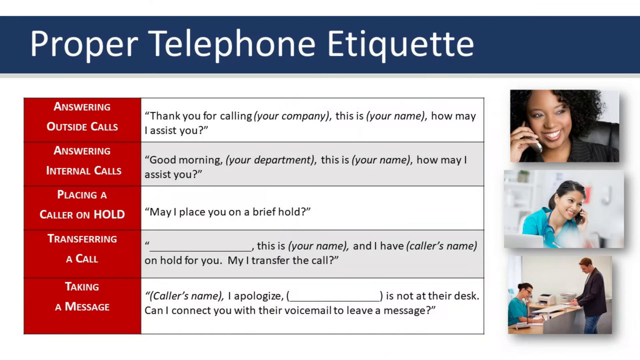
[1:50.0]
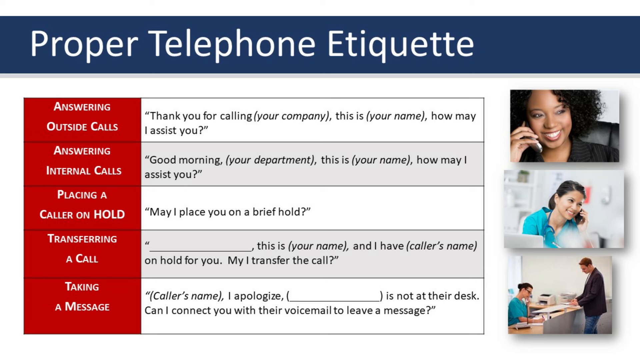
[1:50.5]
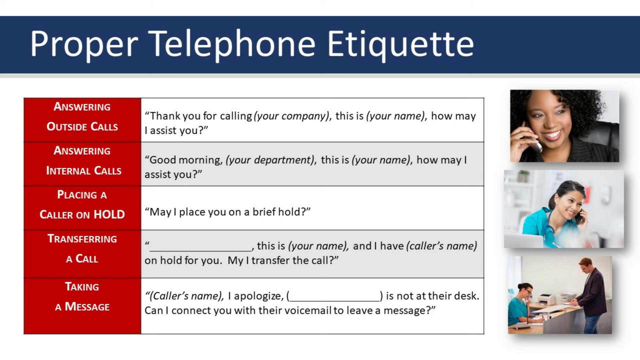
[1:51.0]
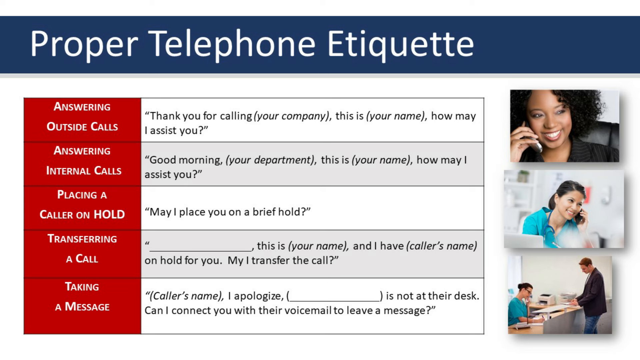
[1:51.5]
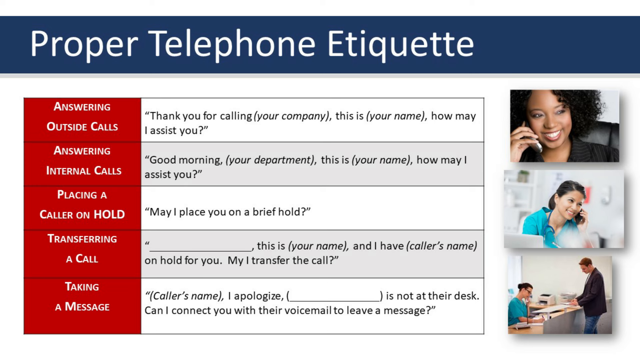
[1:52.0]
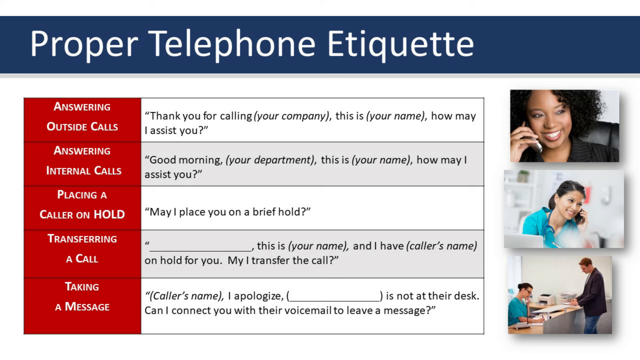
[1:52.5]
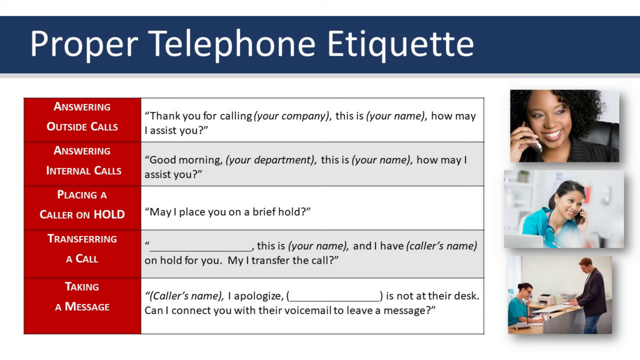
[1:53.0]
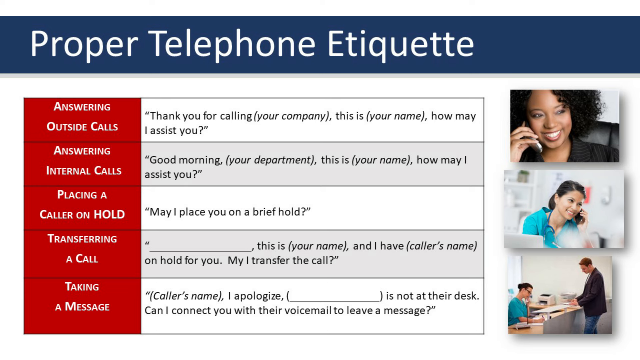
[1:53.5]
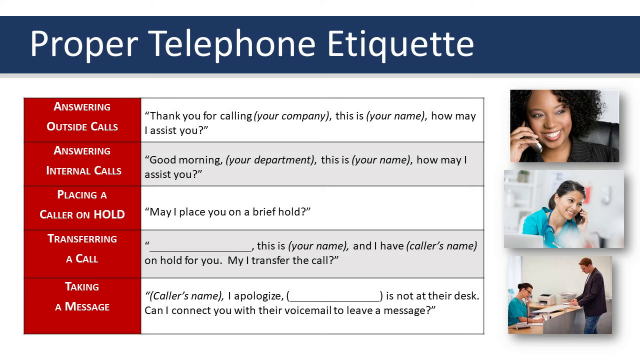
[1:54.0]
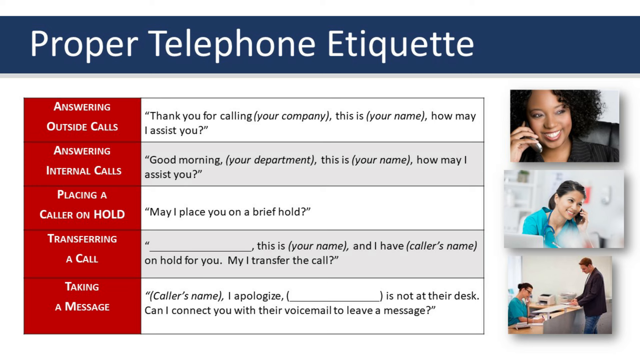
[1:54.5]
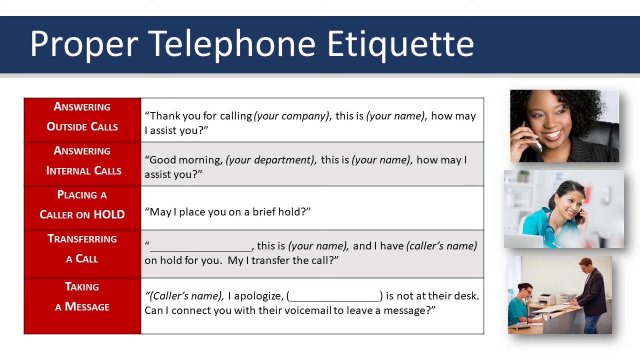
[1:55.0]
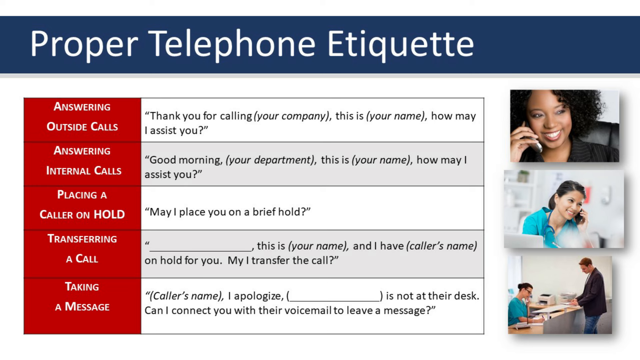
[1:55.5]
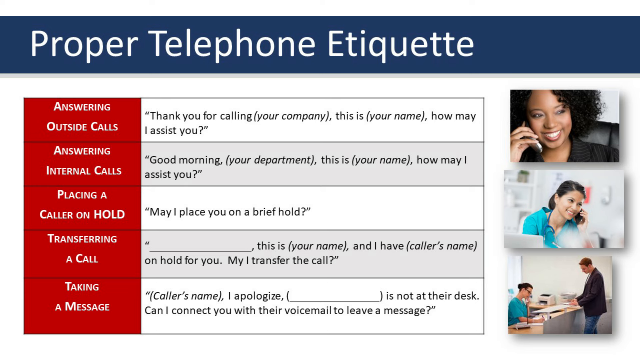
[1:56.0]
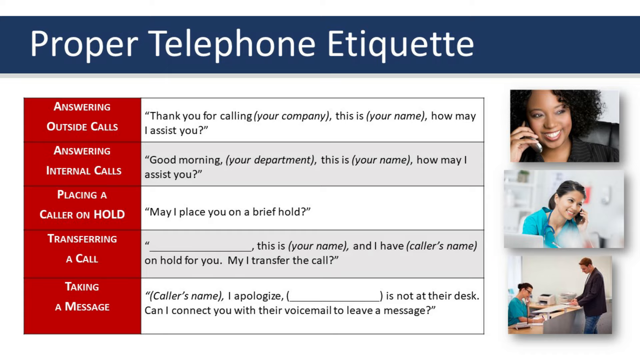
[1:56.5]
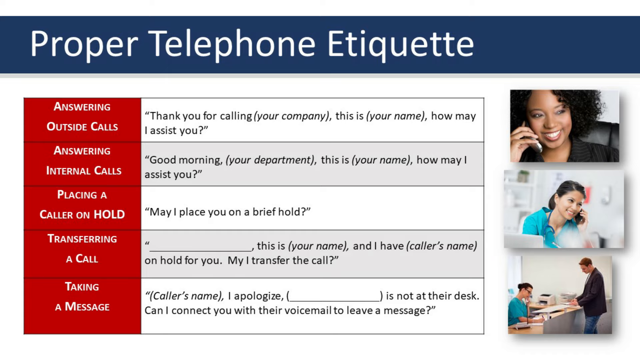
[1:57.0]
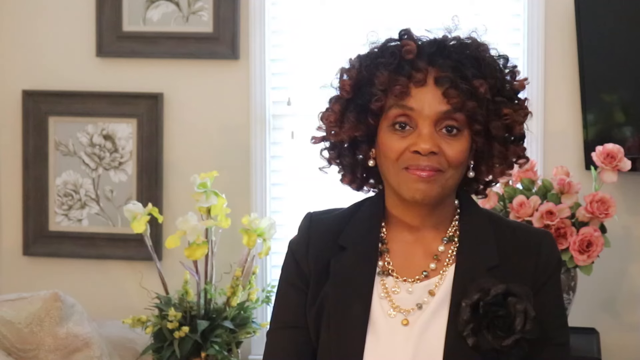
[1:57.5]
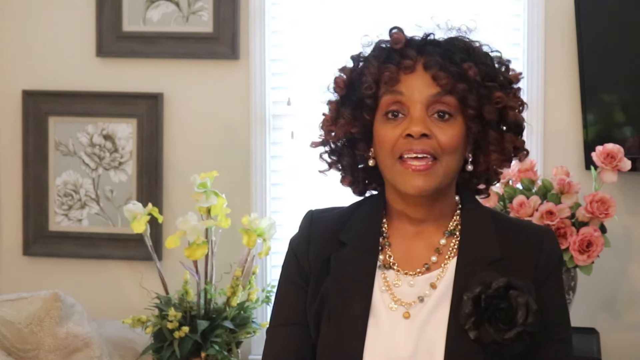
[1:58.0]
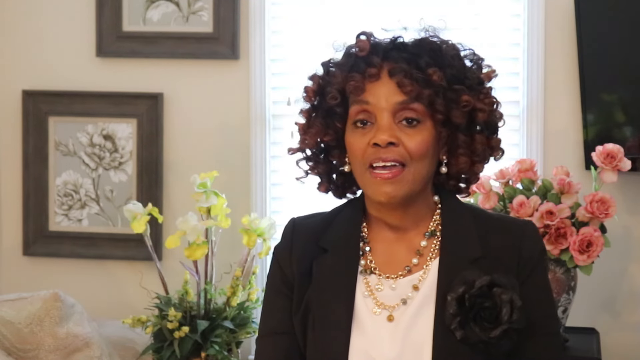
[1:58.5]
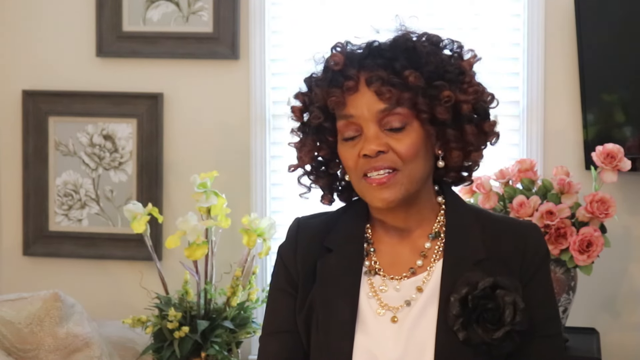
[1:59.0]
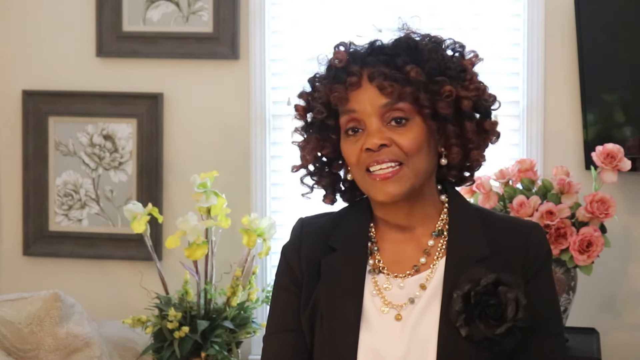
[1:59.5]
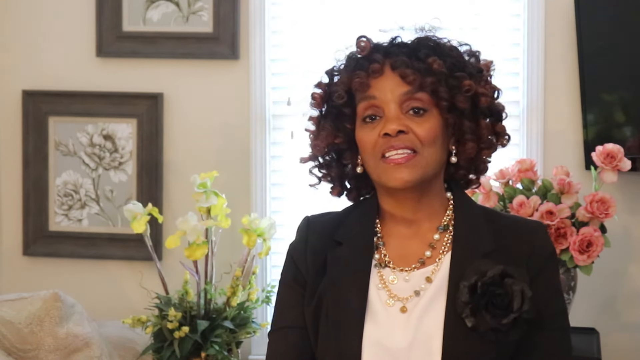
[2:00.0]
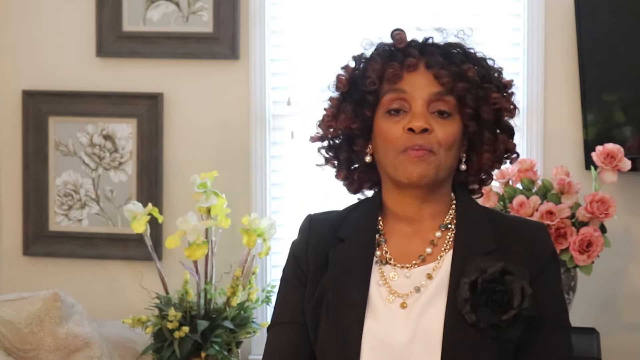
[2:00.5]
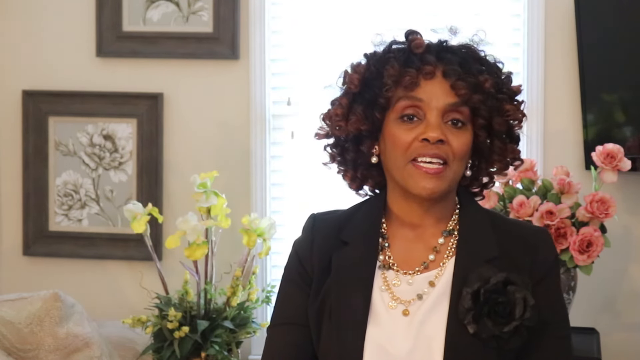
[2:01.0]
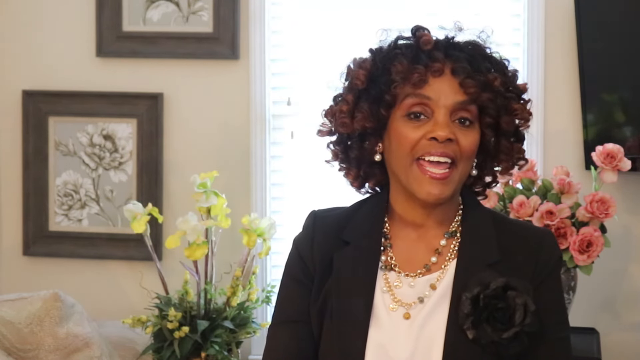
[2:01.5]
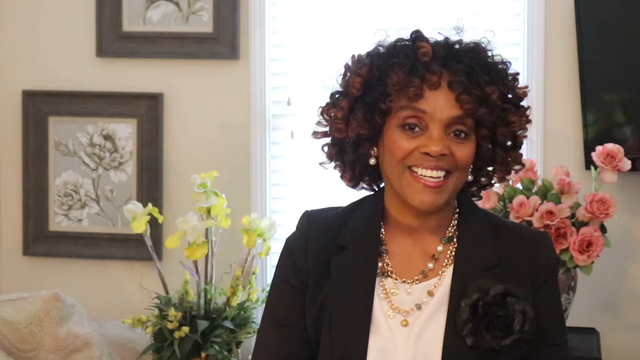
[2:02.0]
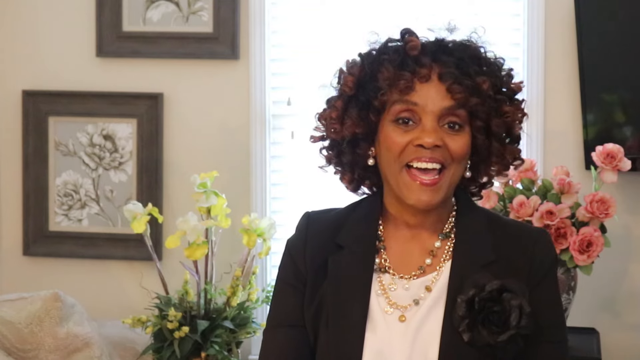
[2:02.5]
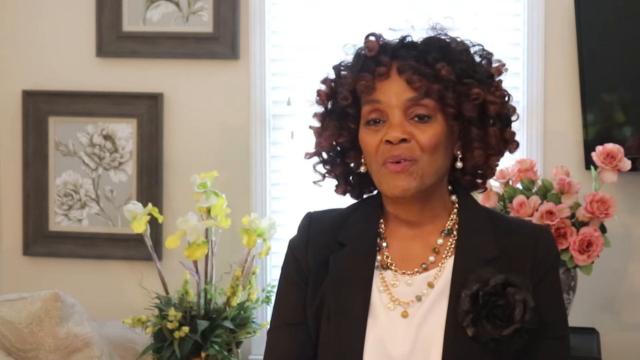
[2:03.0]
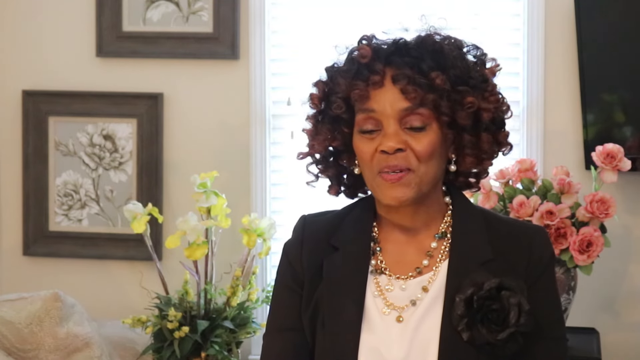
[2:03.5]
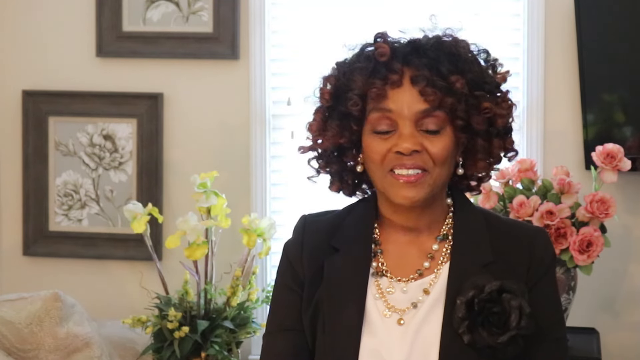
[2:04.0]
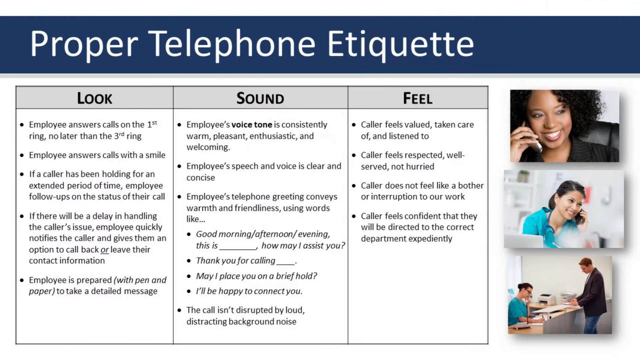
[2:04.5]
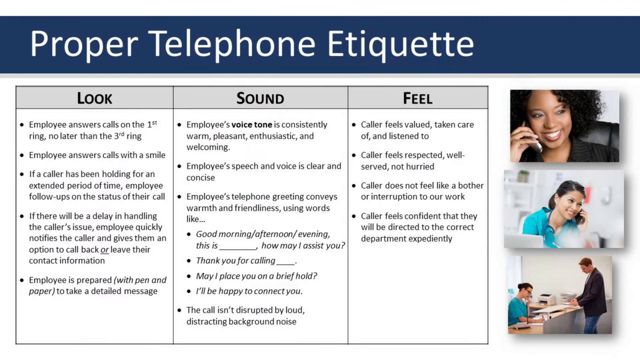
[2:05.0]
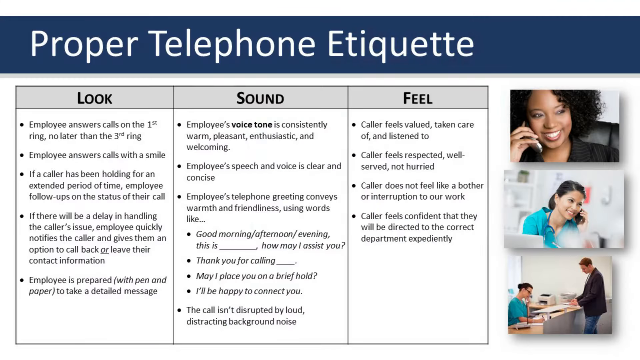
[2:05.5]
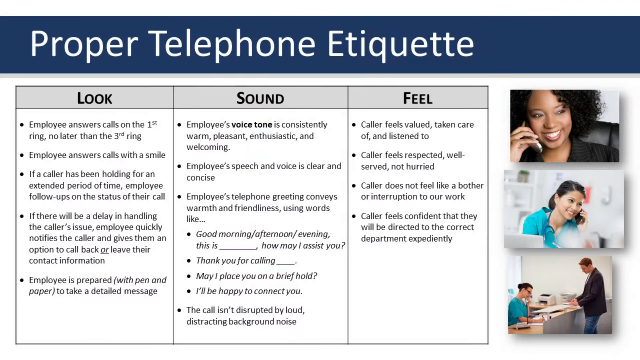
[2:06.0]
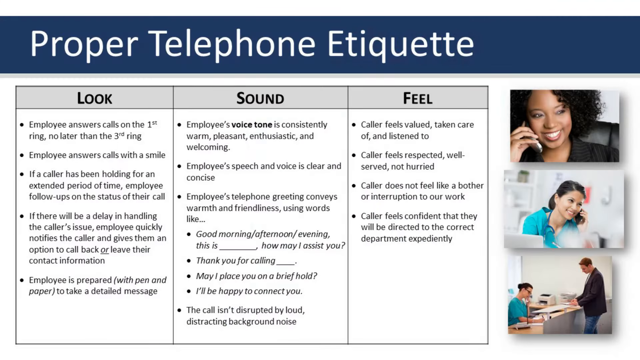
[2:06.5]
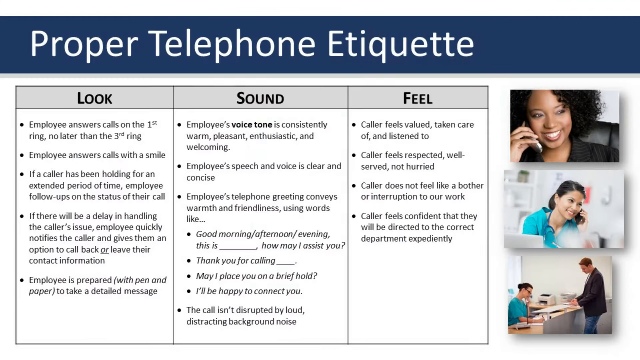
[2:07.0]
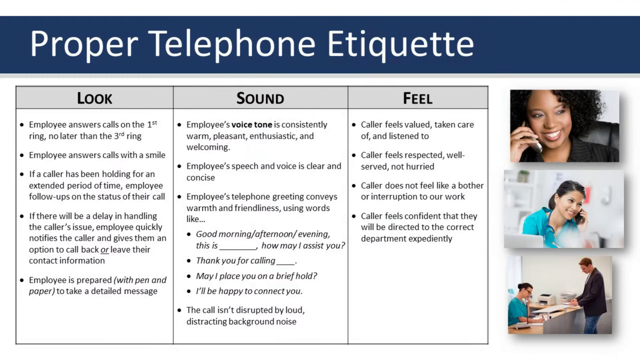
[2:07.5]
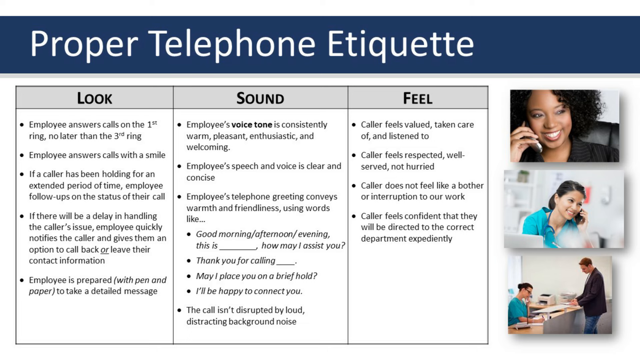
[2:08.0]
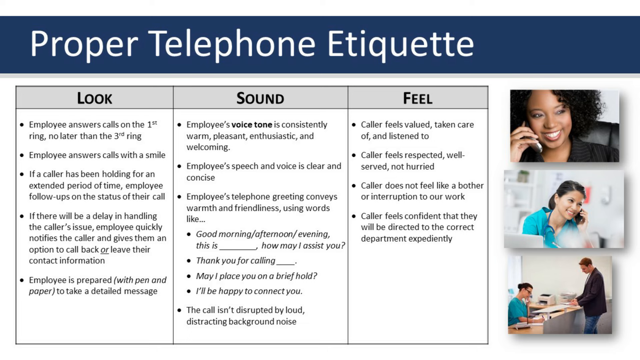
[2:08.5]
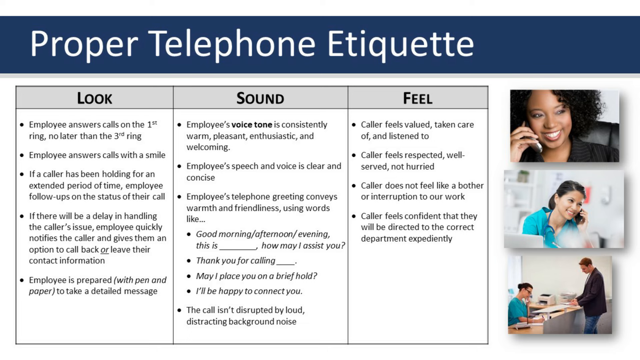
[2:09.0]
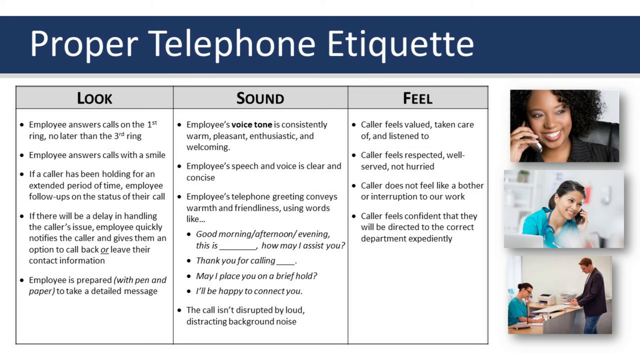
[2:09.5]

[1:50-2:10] A telephone technique page again shows text for answering outside calls ("Thank you for calling your company. This is your name."), answering internal calls ("Good morning, your department. This is your name."), placing a call on hold, transferring a call ("This is your name. And I have a caller's name on hold for you."), and taking a message ("It's not at their desk. Can I connect you with their voicemail to leave a message?"), with questions ending in question marks. The woman is then back on screen, talking and smiling a lot. Then the screen returns to the proper telephone etiquette page with the look, sound and feel items.